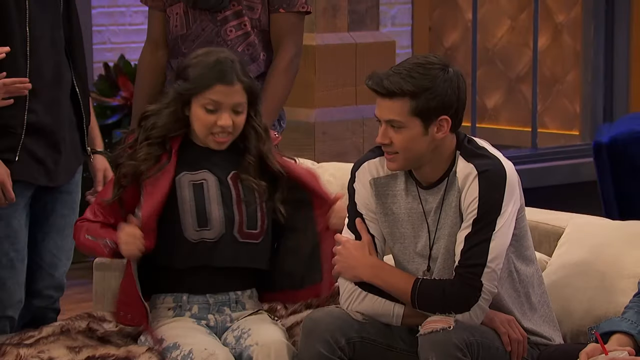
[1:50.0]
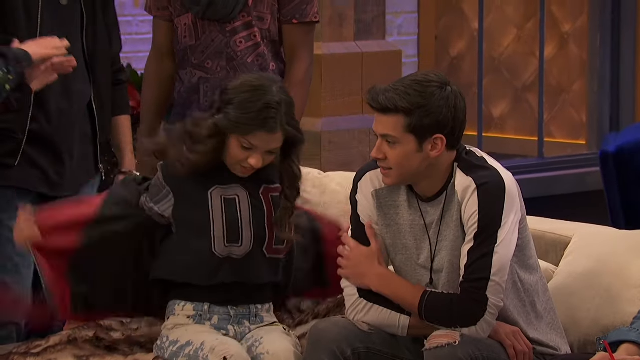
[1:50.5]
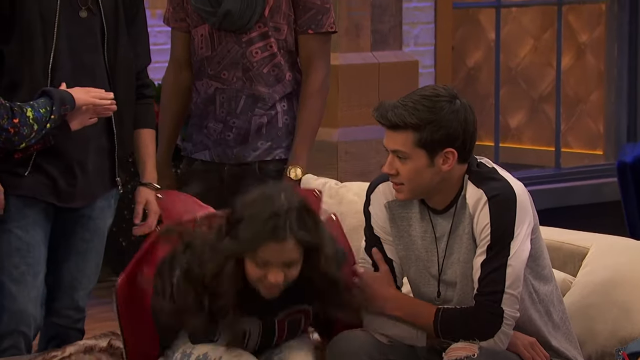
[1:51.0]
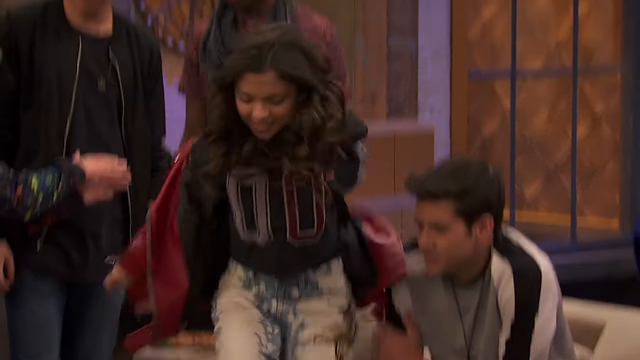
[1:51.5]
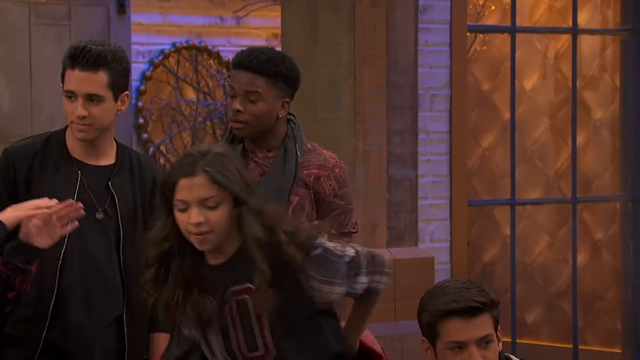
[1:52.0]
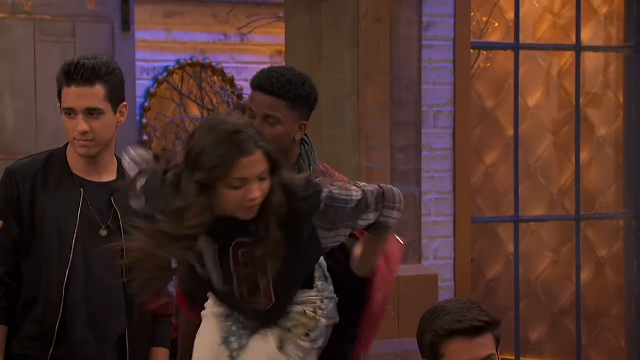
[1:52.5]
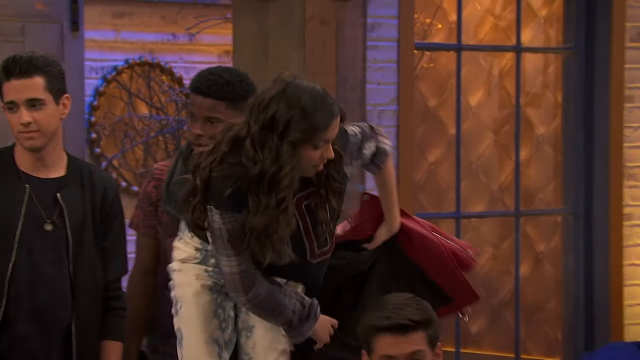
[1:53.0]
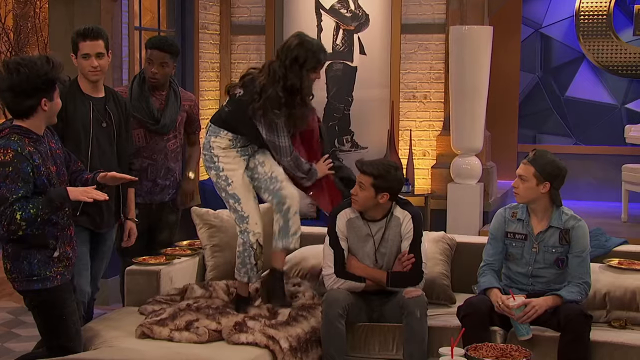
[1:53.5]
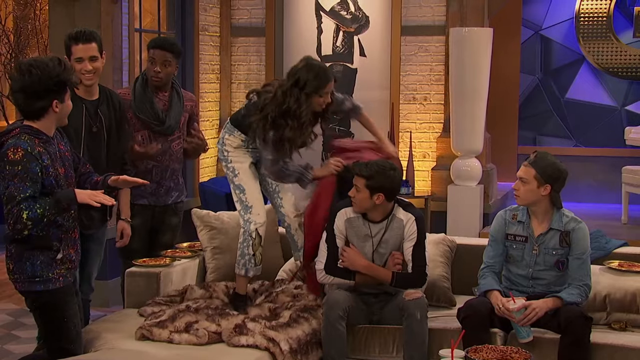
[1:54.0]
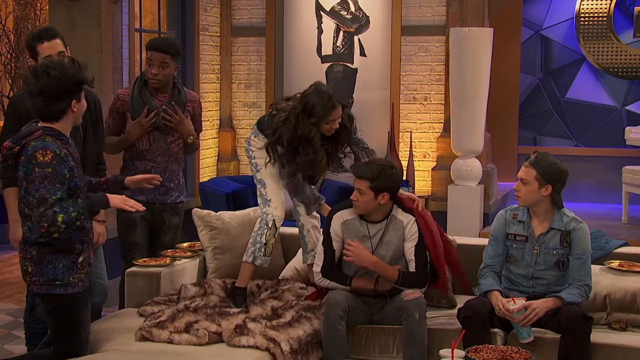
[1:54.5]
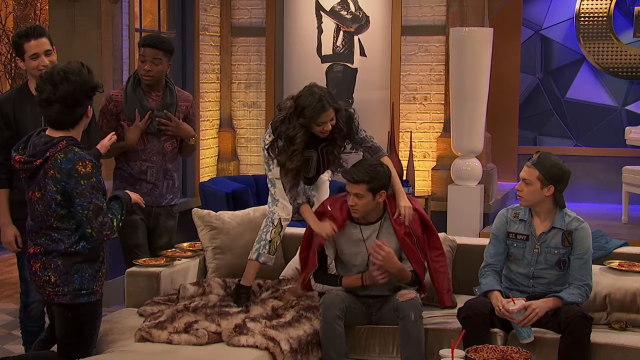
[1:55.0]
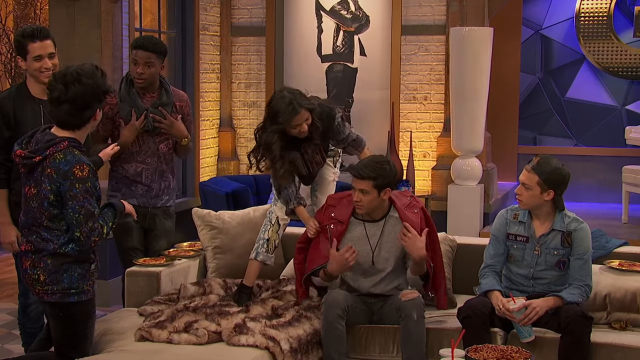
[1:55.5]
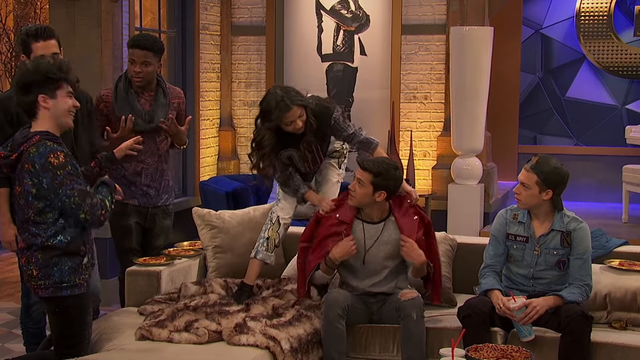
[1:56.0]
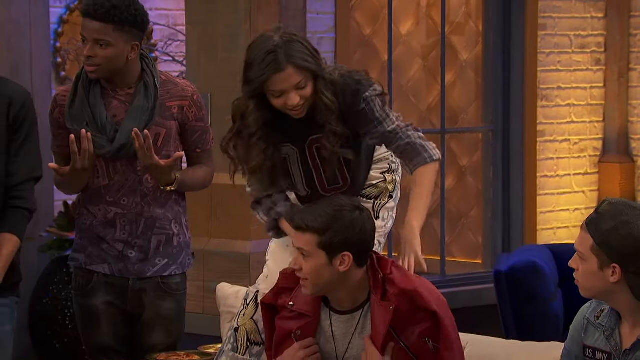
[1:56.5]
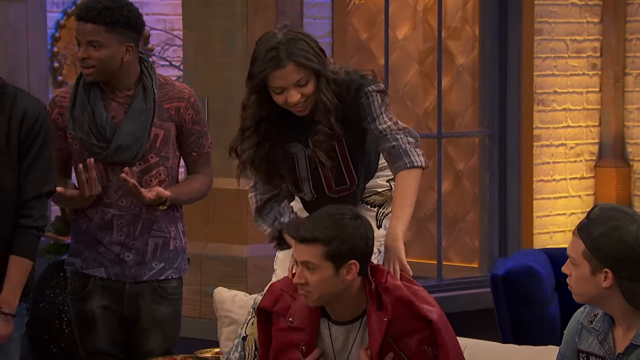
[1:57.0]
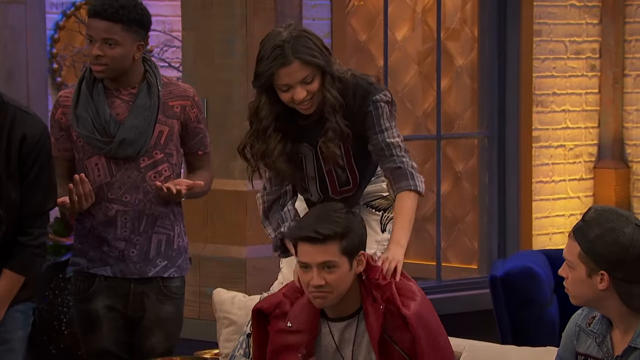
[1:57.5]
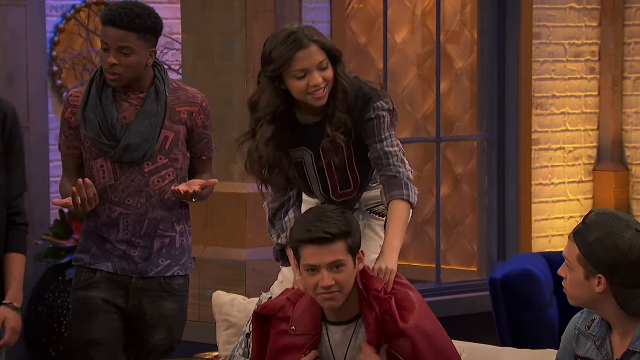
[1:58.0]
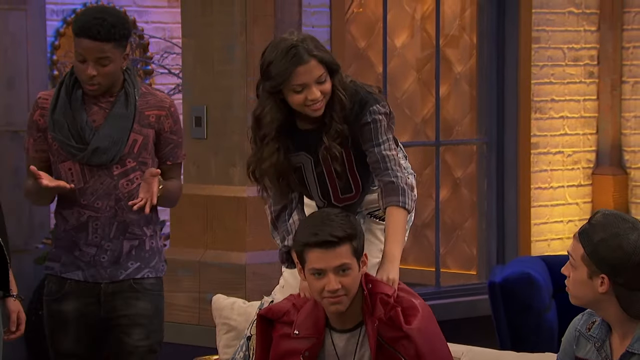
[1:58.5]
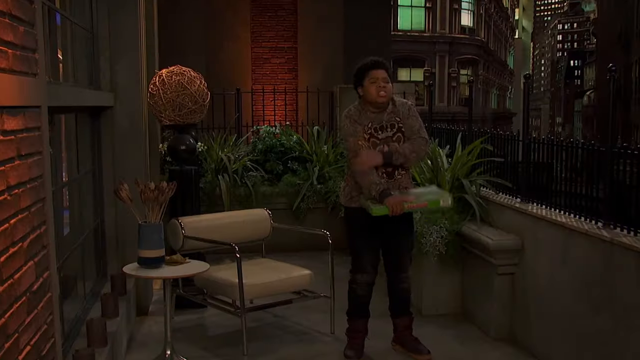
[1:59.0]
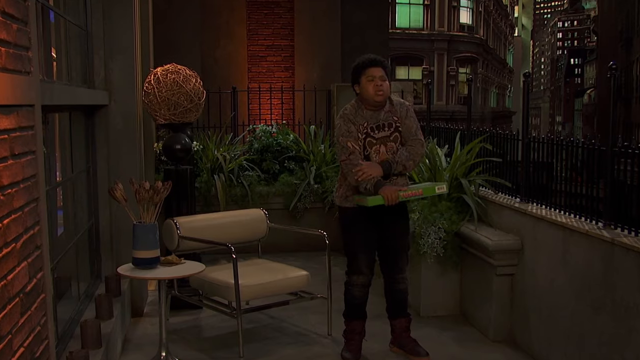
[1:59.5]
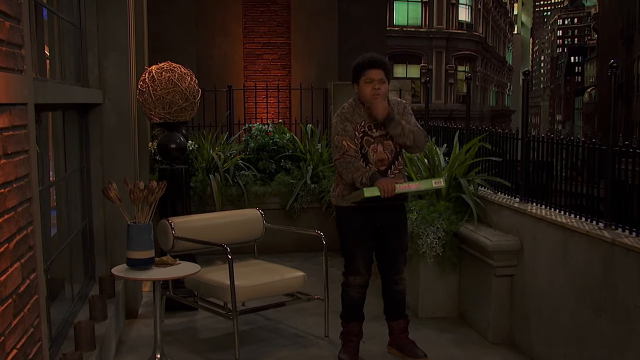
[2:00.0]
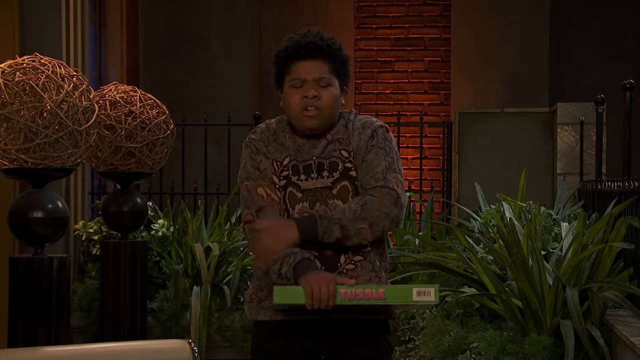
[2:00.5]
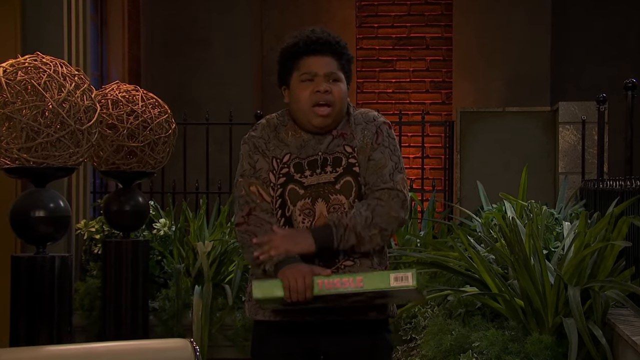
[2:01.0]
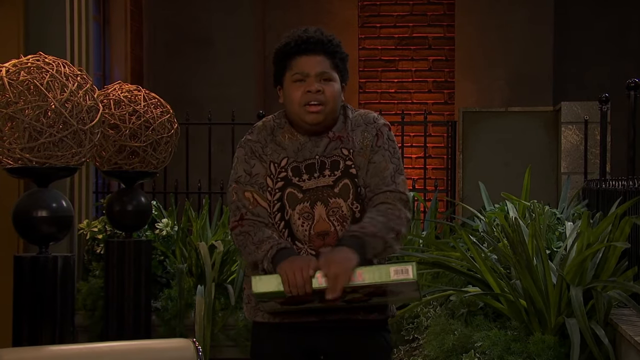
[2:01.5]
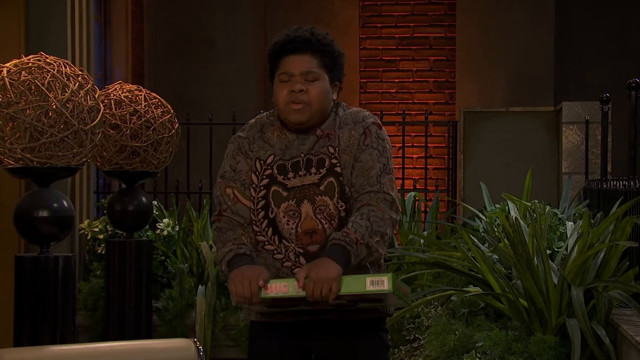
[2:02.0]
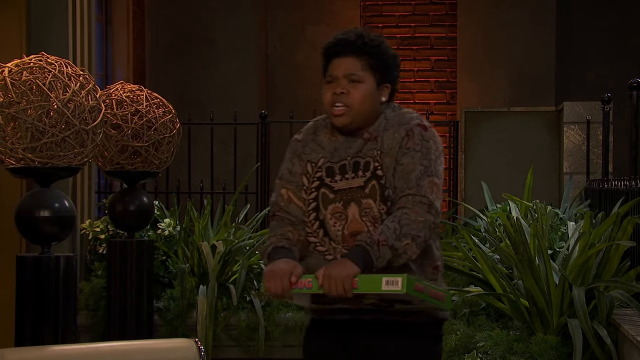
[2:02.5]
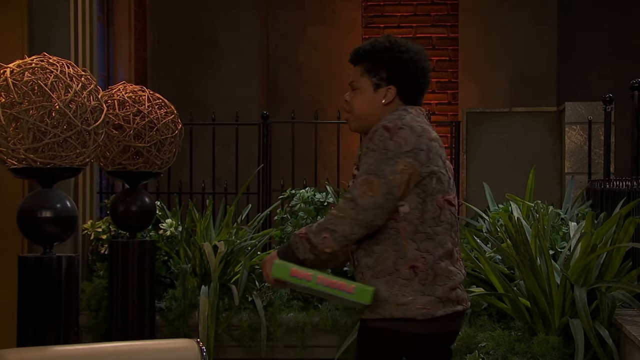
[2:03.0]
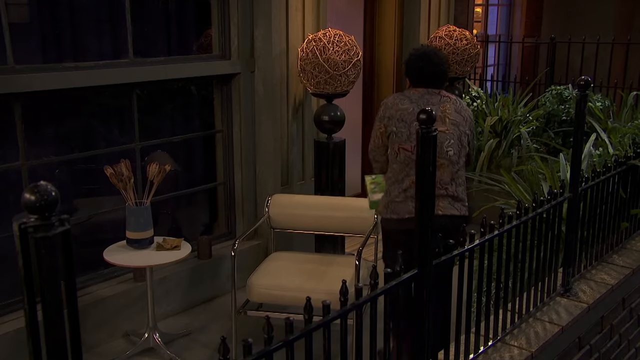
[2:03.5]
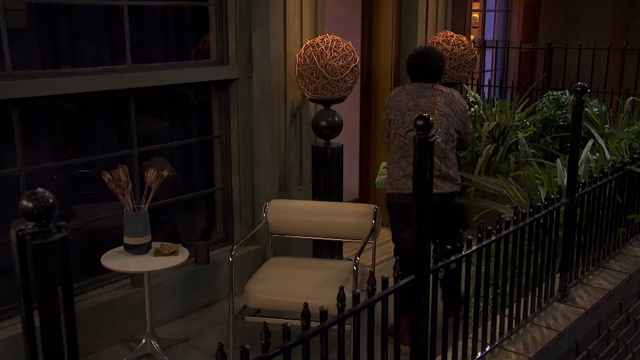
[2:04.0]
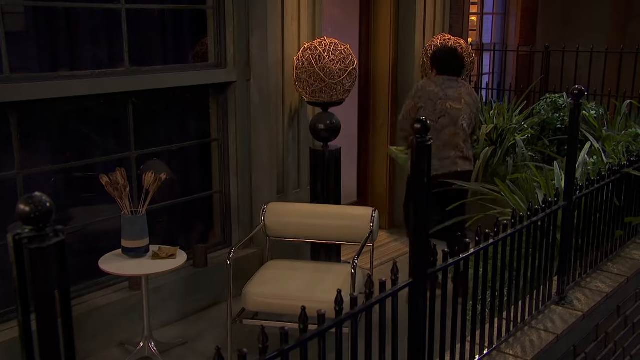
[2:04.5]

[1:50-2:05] The teens appear to be becoming very cold. The young lady who has been on the couch rises, removes her coat and puts it on one of the younger visitors next to her, then rubs his shoulders as if warming him from the cold. Meanwhile, the young man who was trying to get everyone to play the board game is alone outside, appears to be very cold, and does not appear to be able to get back into the room where the rest of the party is.